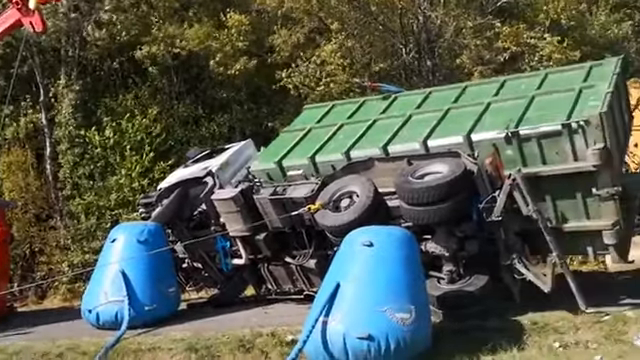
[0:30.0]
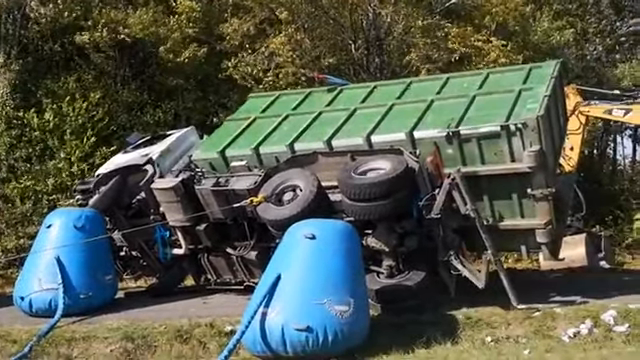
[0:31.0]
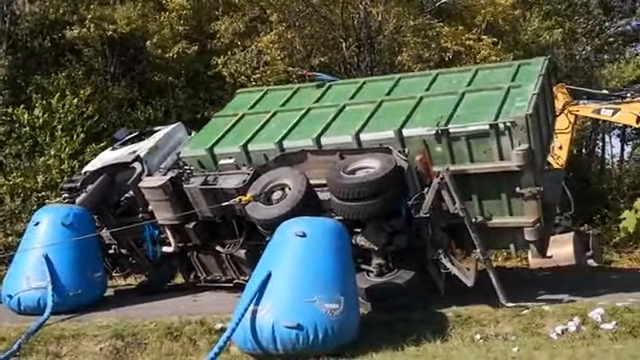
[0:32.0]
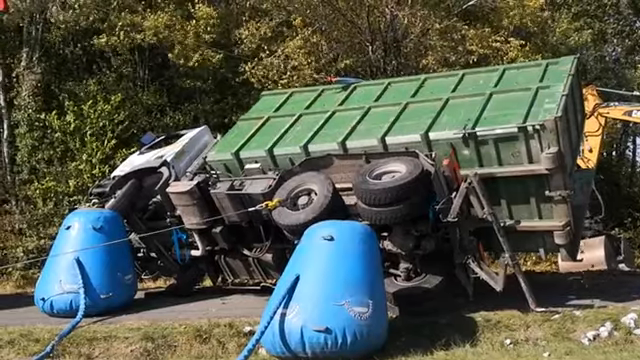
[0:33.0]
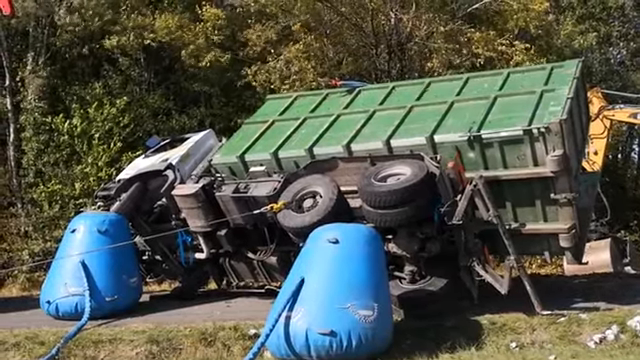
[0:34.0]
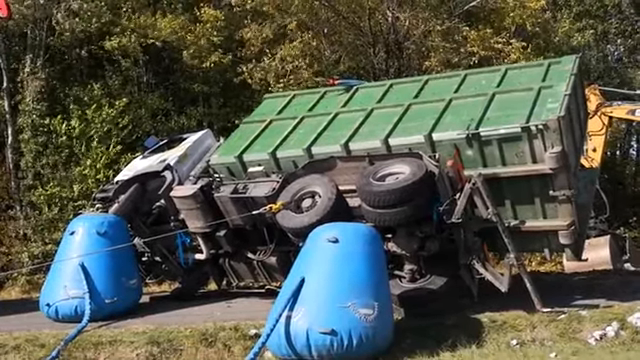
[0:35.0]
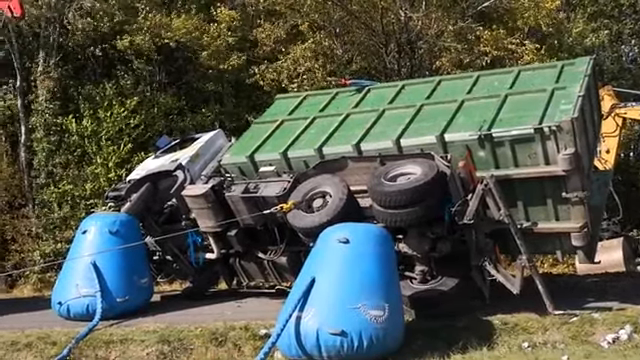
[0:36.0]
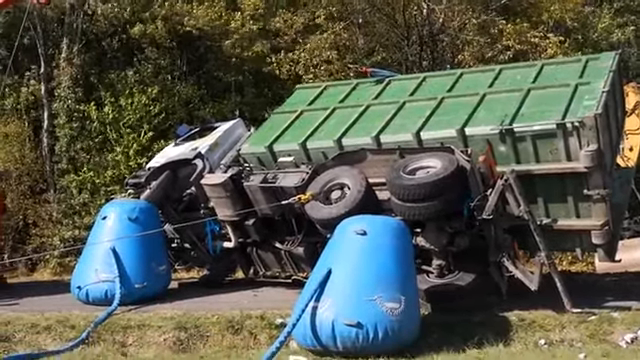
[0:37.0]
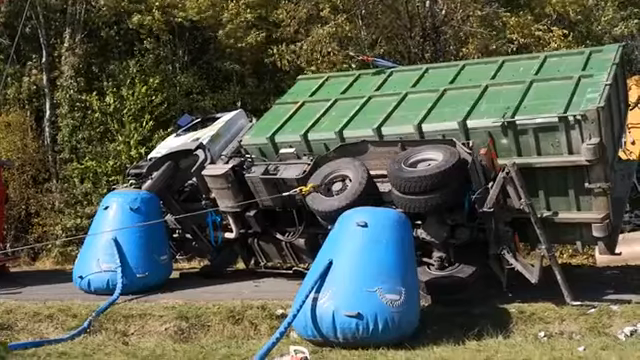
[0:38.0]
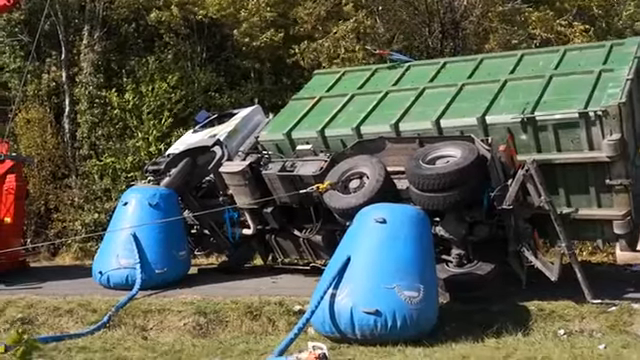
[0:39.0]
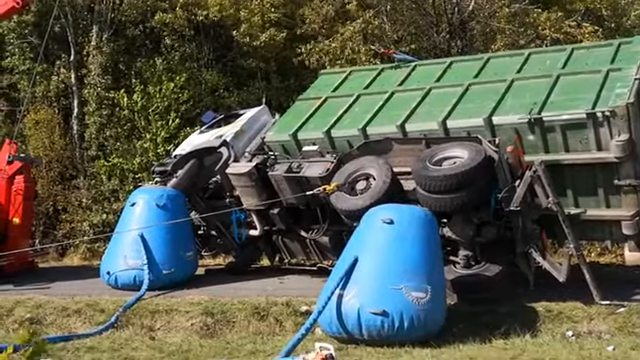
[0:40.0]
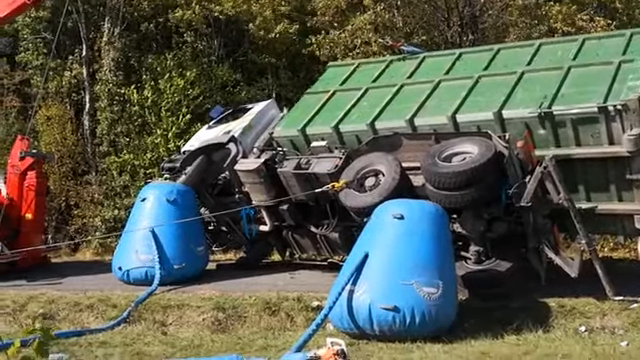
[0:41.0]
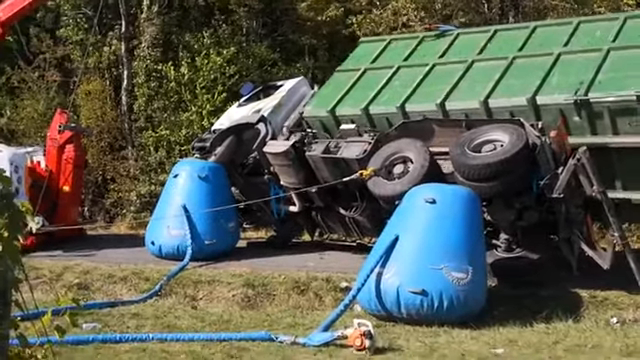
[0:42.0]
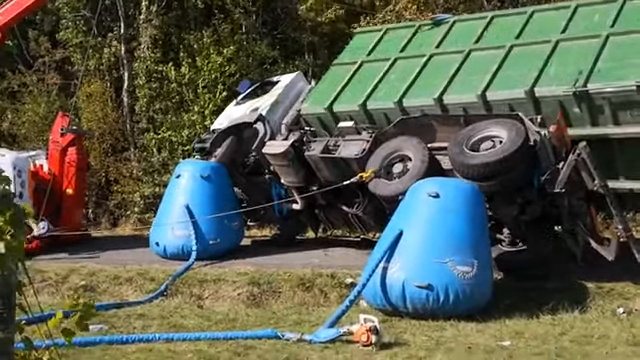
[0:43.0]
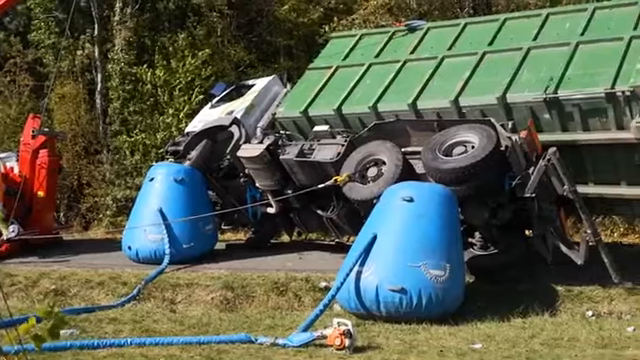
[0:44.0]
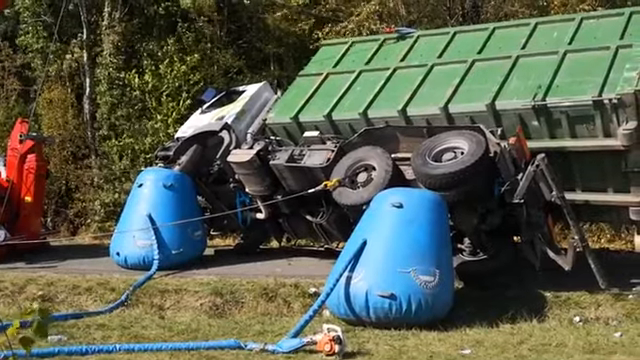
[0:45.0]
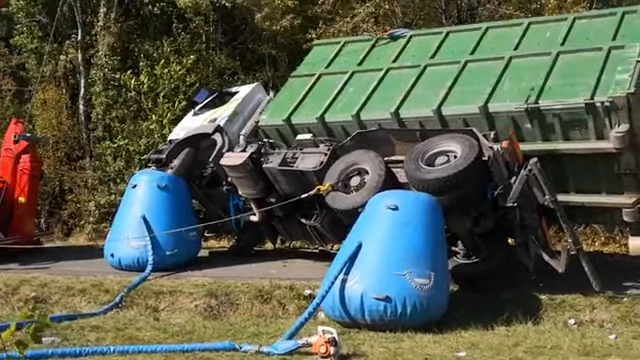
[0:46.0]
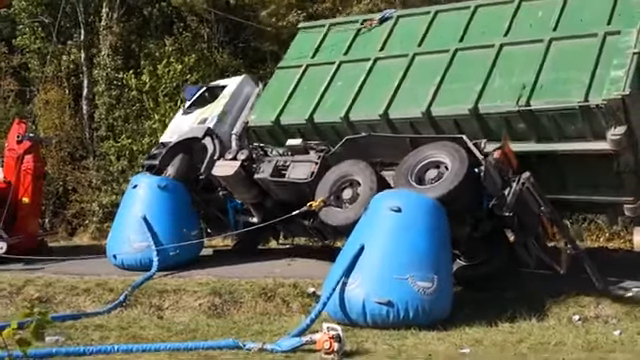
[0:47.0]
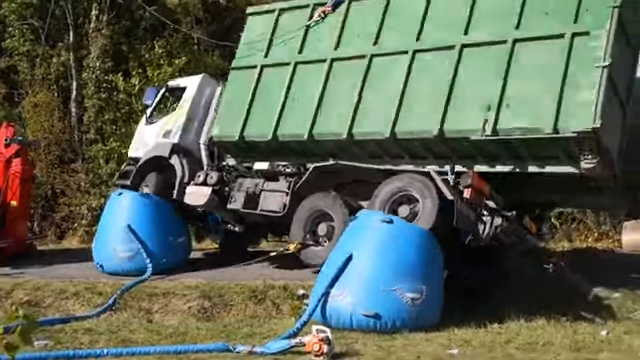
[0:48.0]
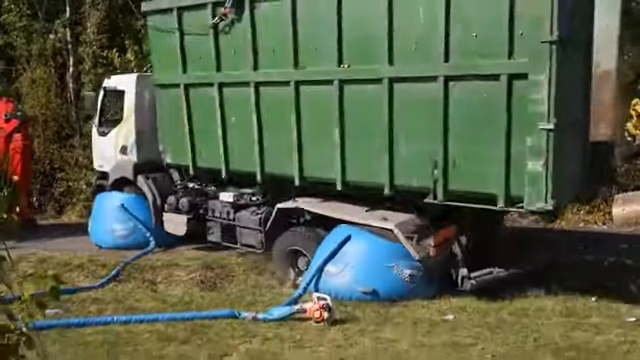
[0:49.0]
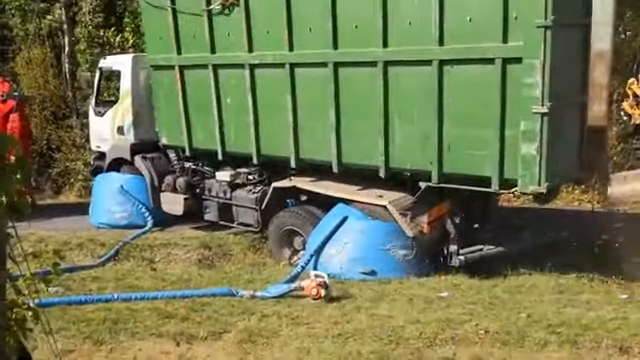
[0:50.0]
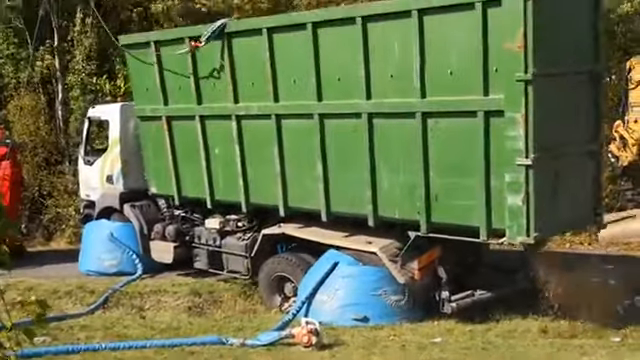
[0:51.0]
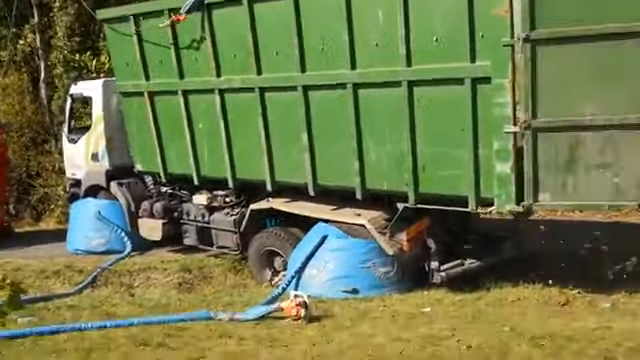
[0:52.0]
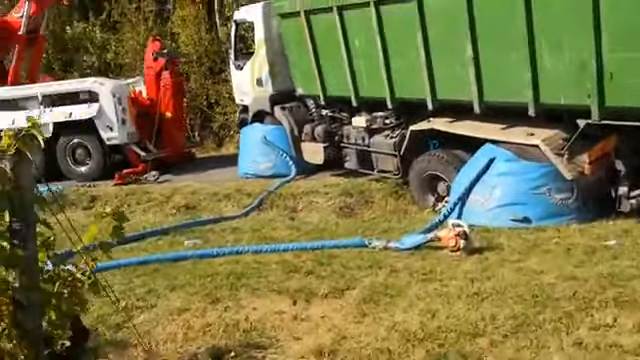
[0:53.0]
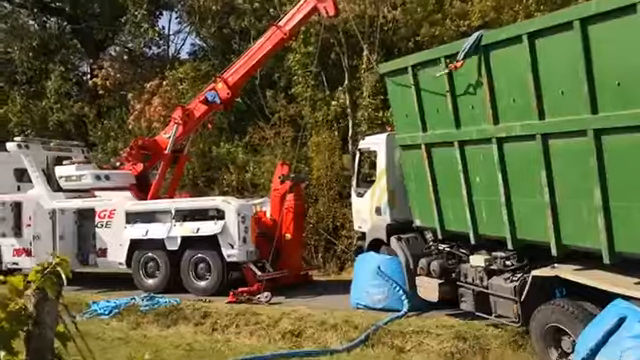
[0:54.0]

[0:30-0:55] The truck is still overturned, with cables attached to its tires and wheels. Then the truck starts to move as the crane rights it: it is slowly pulled to the left, flipped, and set upright, and its tires land on the blue blow-up buoys, which look like they cushion the impact. Dirt and other material comes out of the back of the truck as it is righted.